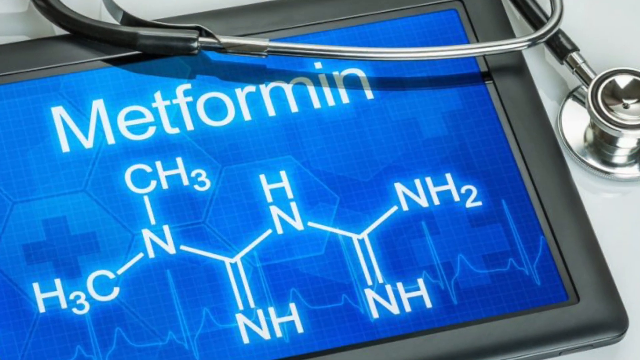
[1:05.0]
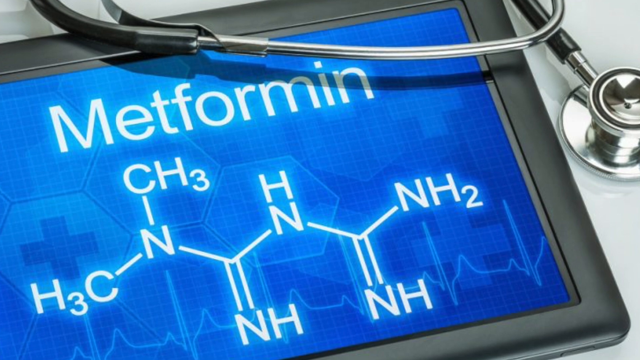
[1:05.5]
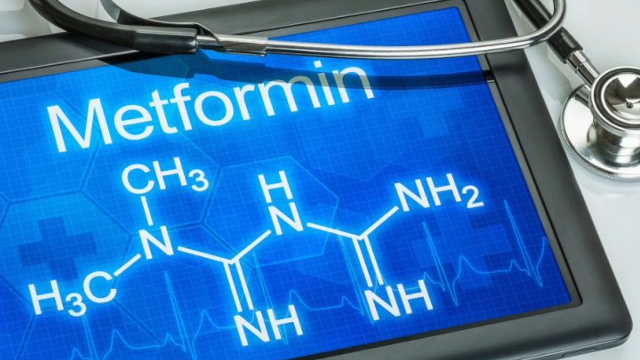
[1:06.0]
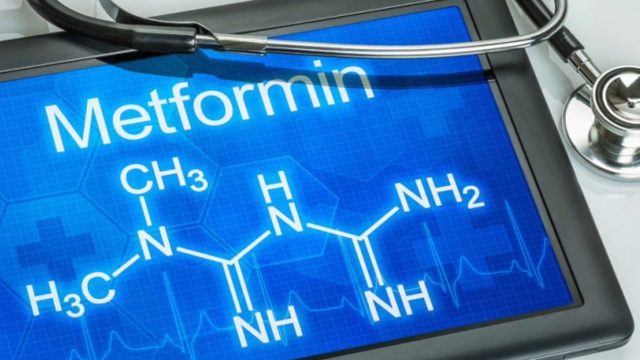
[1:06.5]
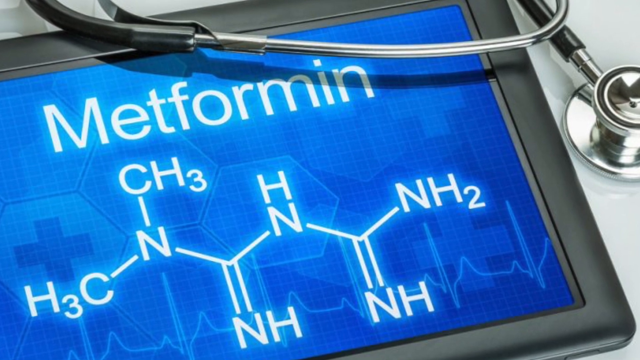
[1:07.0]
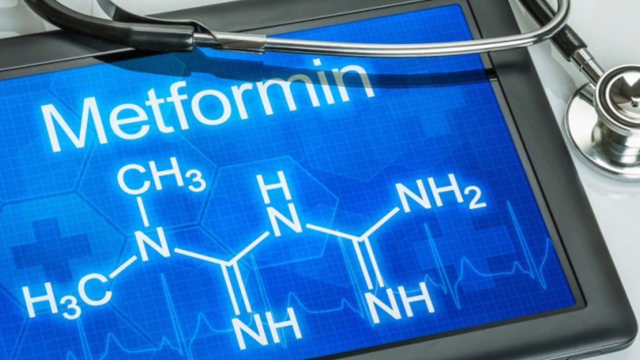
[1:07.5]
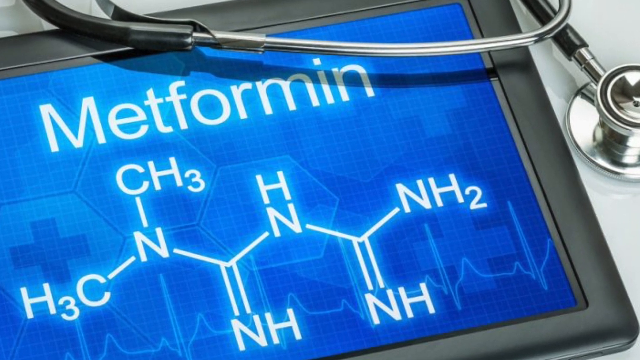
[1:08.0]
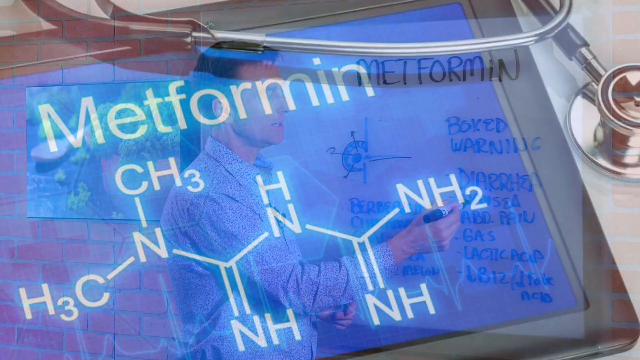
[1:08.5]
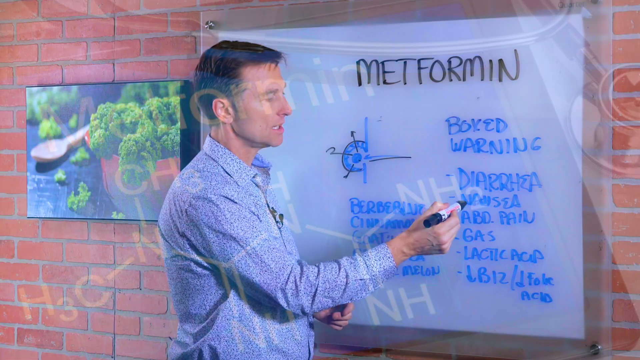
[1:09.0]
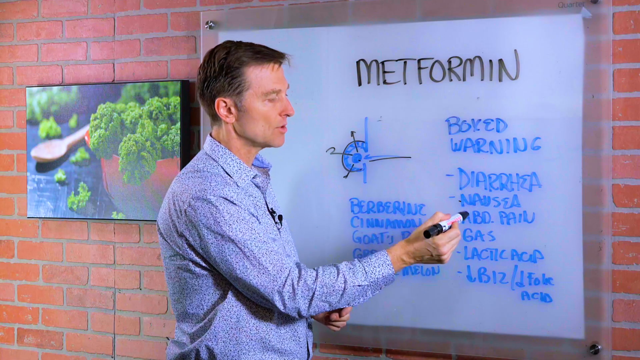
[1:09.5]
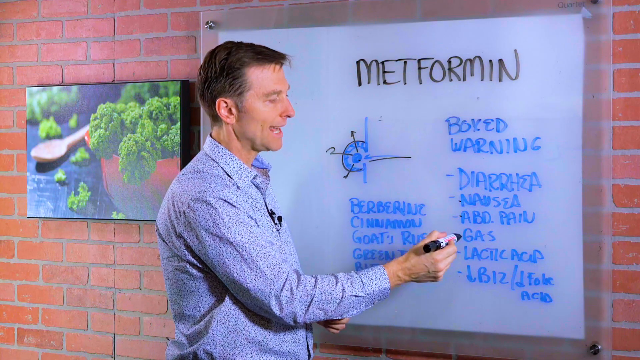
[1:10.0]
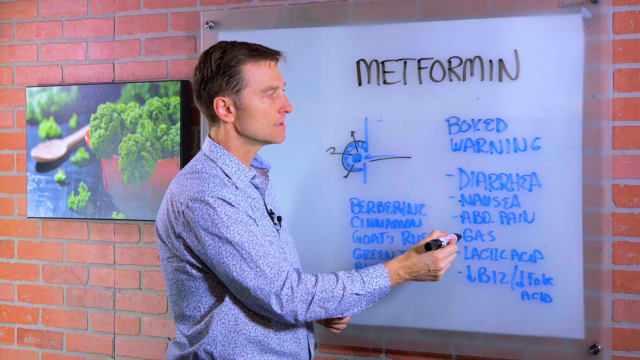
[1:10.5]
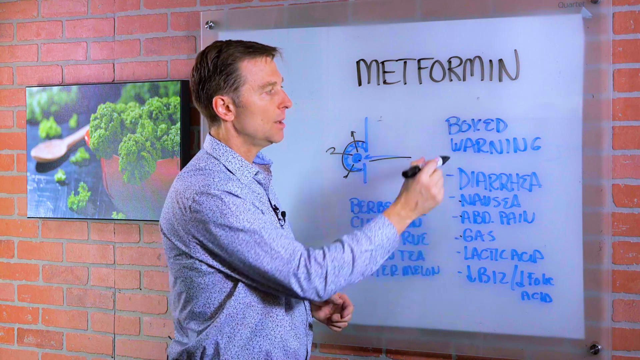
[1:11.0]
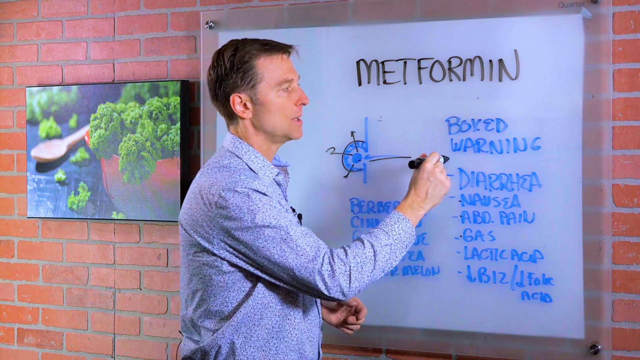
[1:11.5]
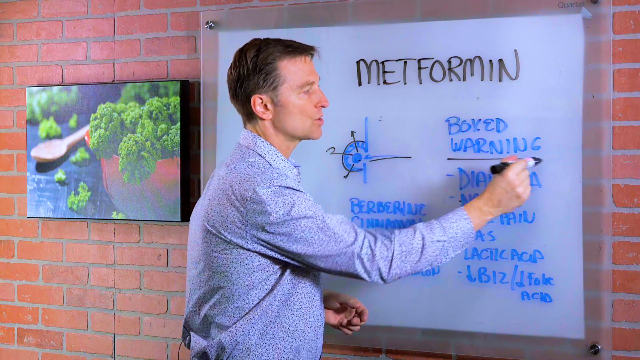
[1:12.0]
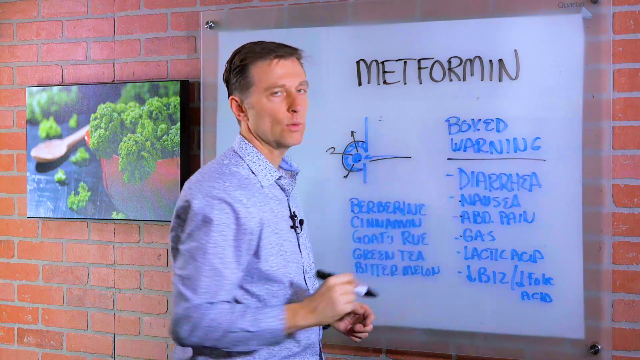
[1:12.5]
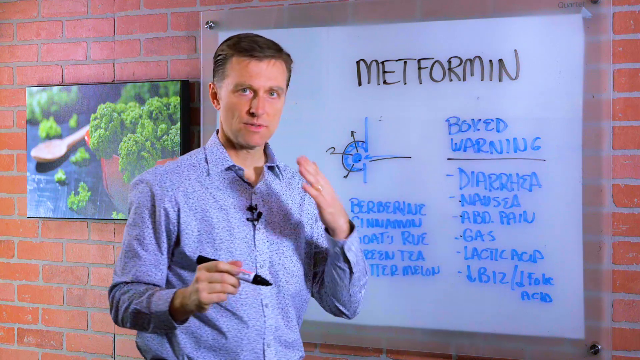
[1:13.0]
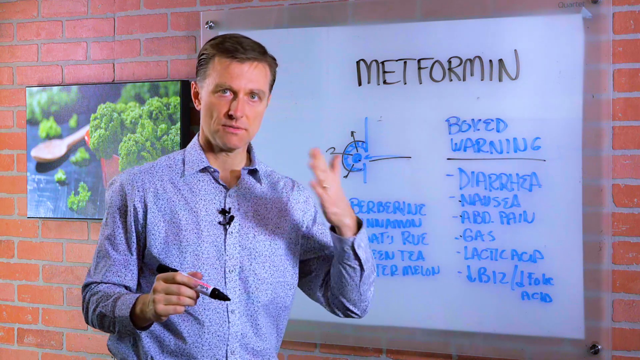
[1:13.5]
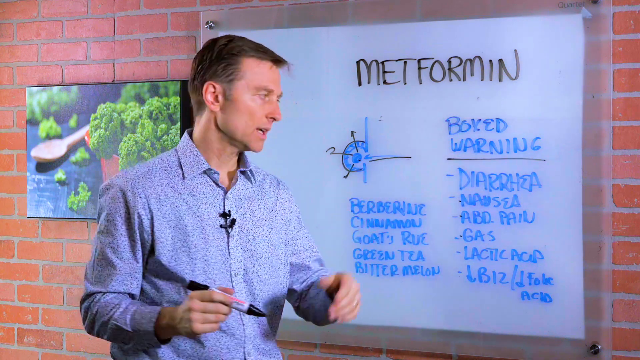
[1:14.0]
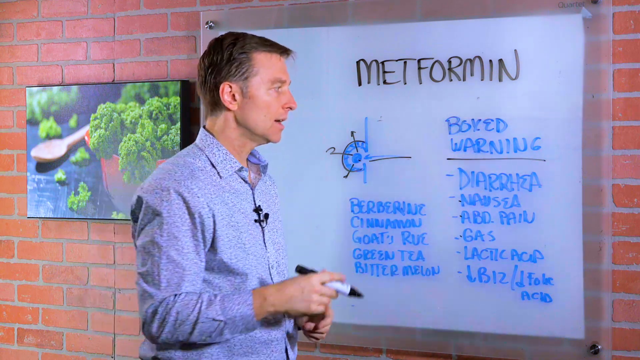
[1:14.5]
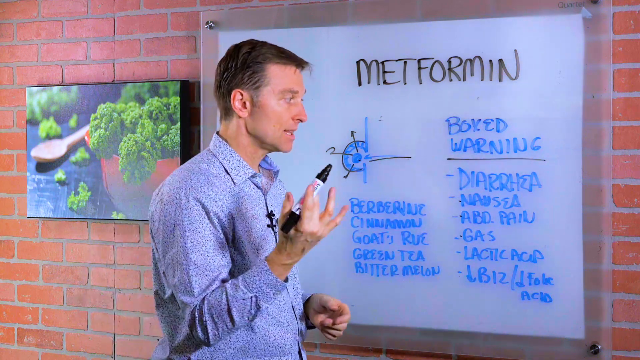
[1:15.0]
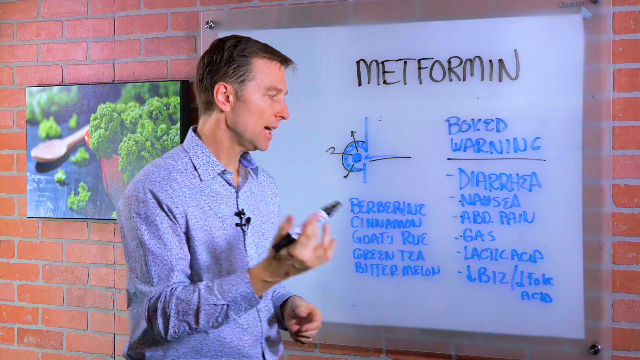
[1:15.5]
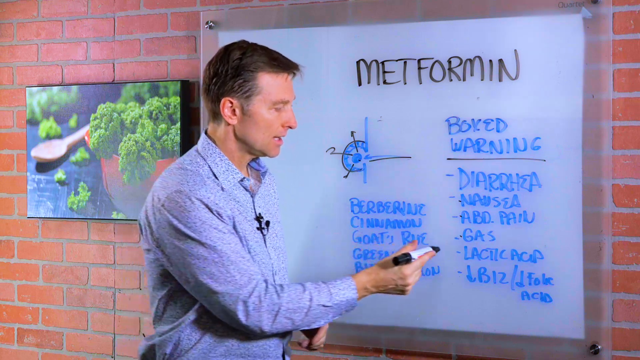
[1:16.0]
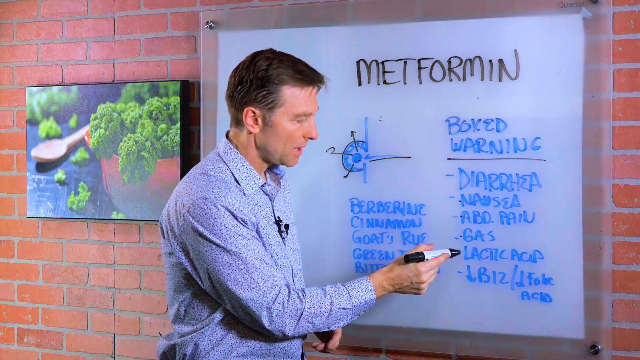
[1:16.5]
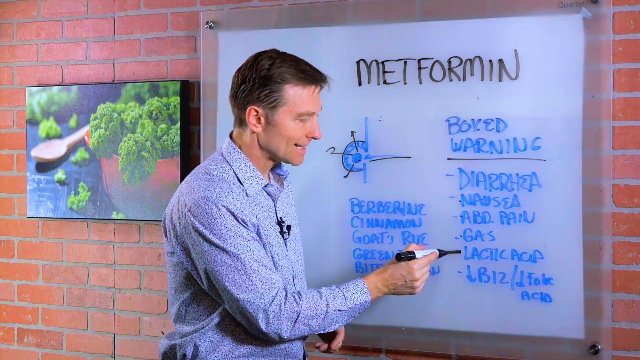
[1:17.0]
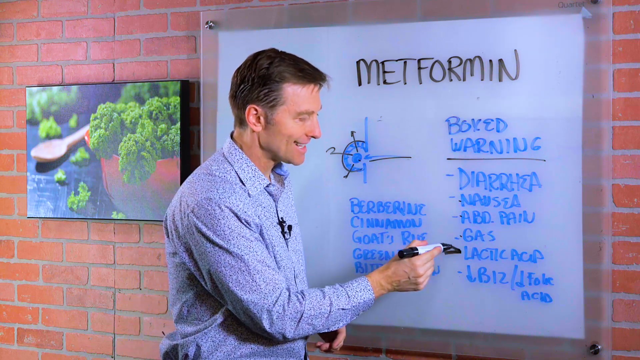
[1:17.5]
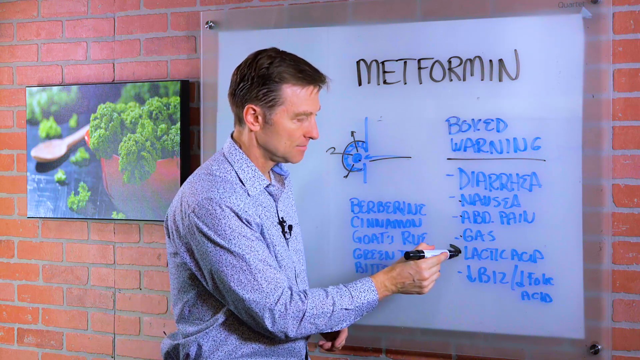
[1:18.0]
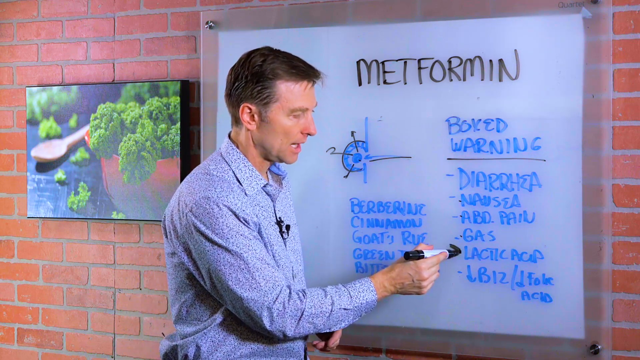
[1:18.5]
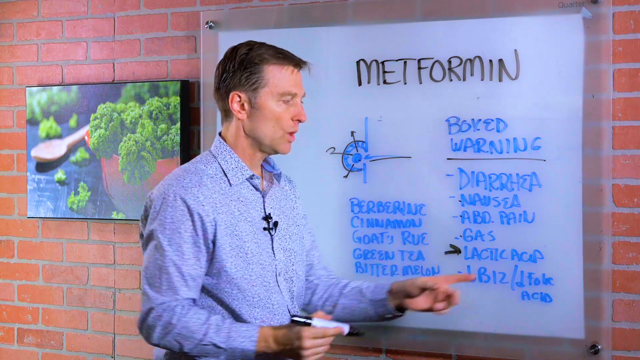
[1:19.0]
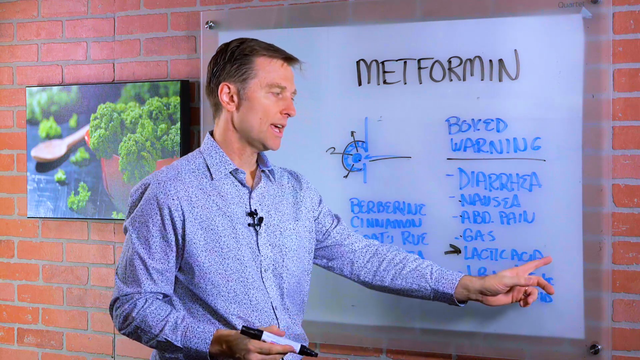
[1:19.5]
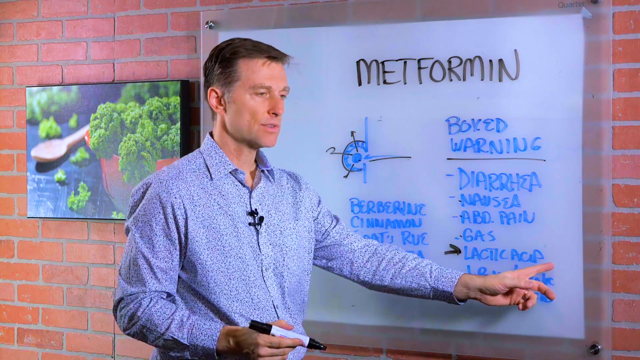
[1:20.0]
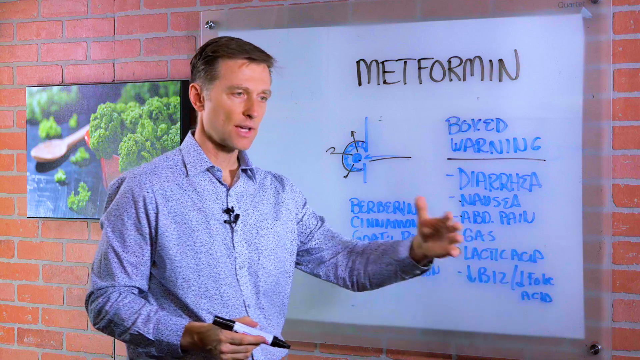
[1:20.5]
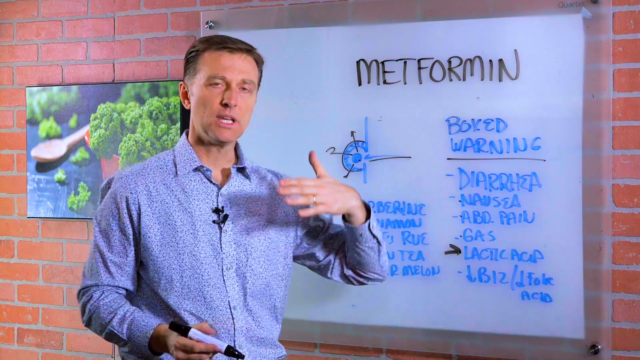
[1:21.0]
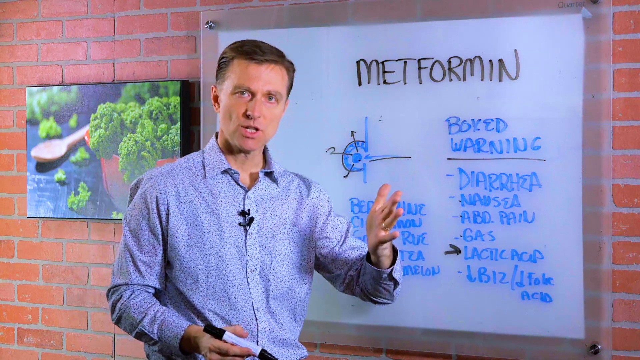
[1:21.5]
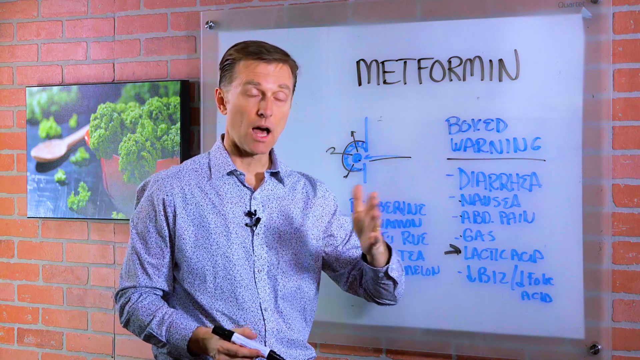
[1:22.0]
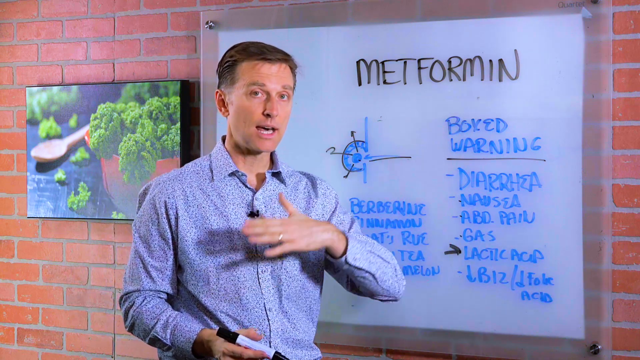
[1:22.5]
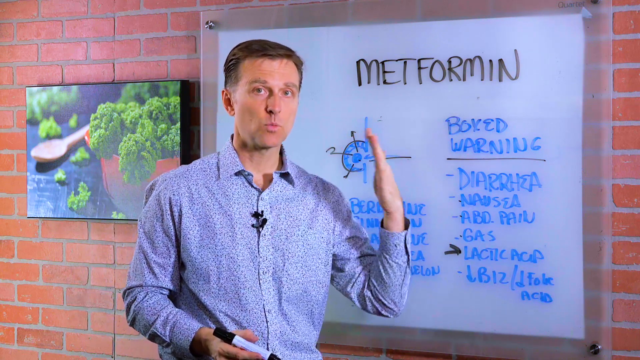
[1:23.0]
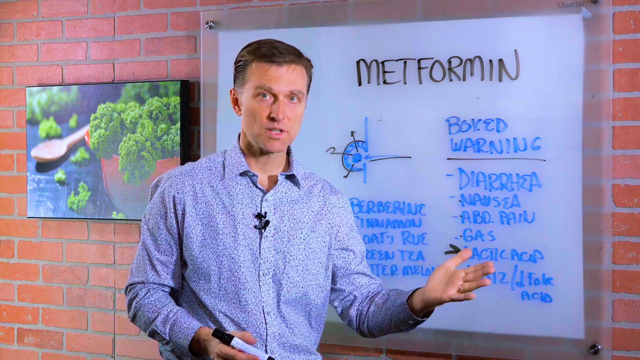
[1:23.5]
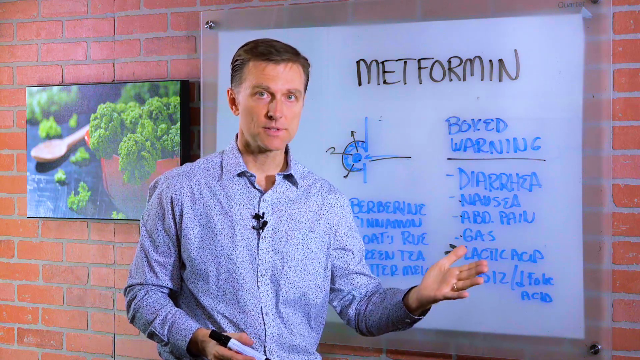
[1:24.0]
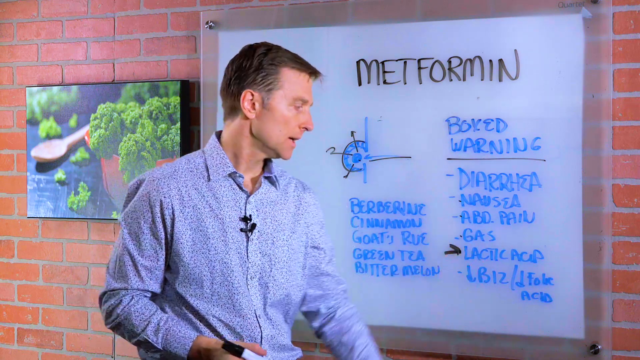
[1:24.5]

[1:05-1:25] The man fully turns his body toward the whiteboard and puts the cap on the end of the black marker. He begins drawing on the right-hand side of the whiteboard, highlighting each point in the side effects and boxed warning column, and draws thicker arrows as he speaks to each point. He underlines a line, then uses the marker tip to point to each item. He underlines "warning" in "boxed warning" and draws an arrow next to the words "lactic acid." He turns between the whiteboard and the camera as he gestures with his hands, then fully turns toward the whiteboard as he addresses the points toward the bottom, pointing with both the marker in his right hand and his empty left hand. The stock photo of metformin is on some sort of digital tablet, with the stethoscope in the top right corner. The man has a battery pack on his side.